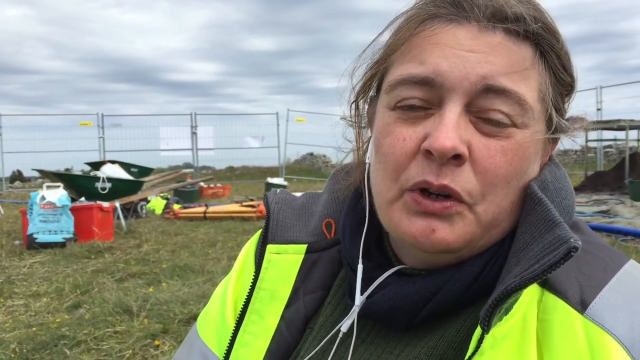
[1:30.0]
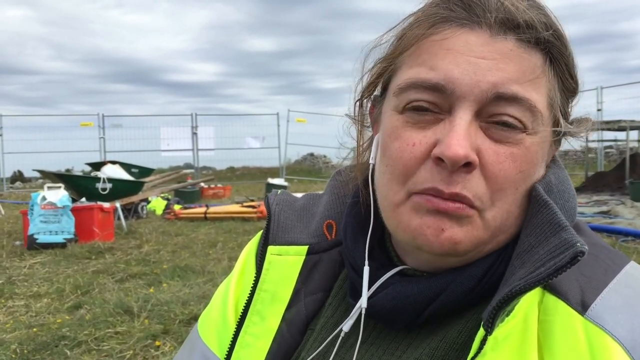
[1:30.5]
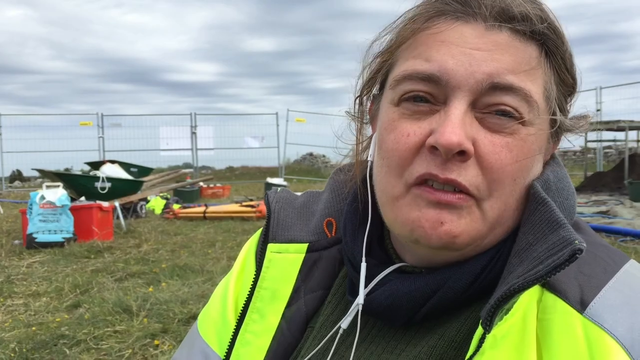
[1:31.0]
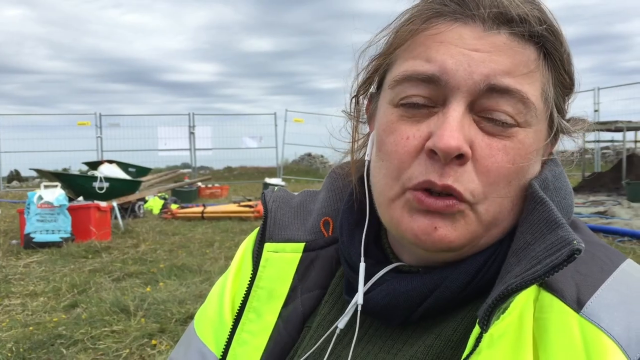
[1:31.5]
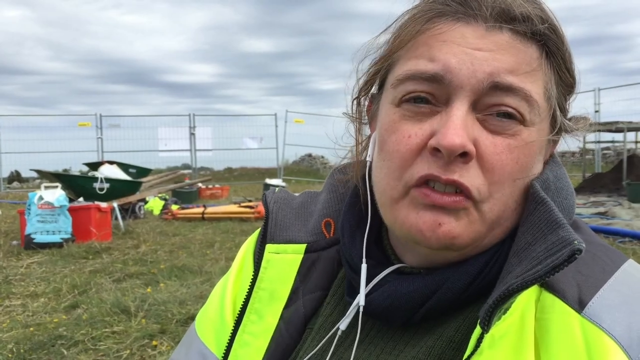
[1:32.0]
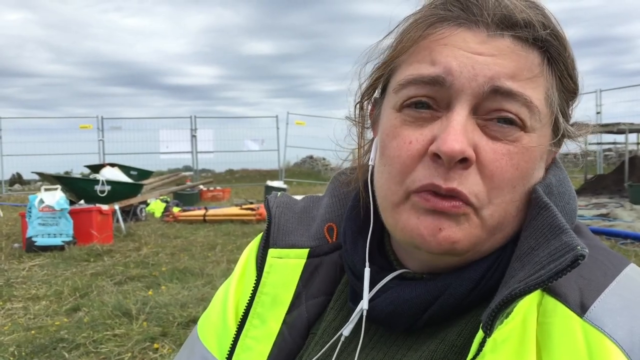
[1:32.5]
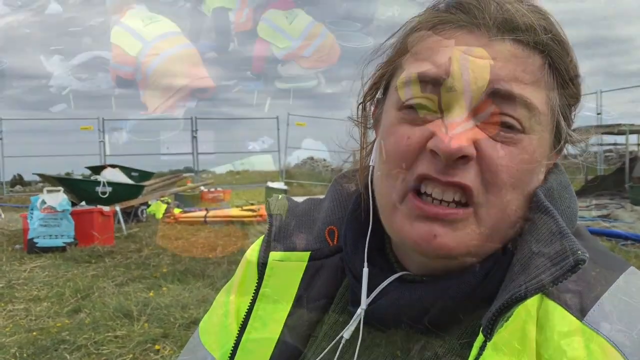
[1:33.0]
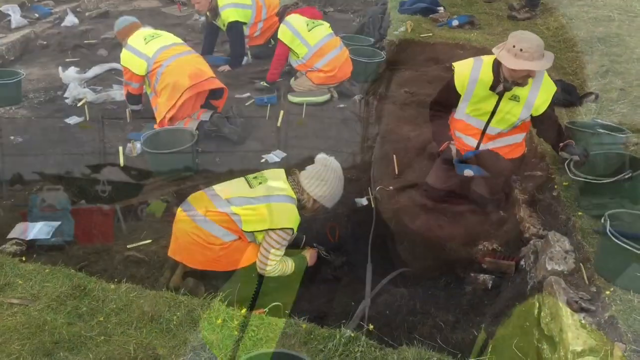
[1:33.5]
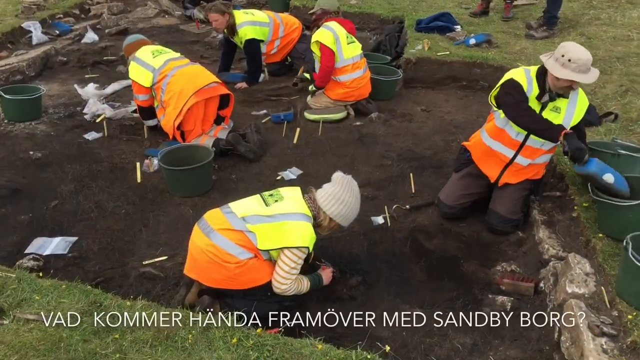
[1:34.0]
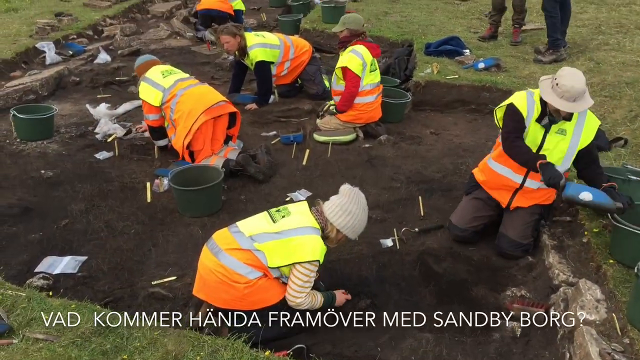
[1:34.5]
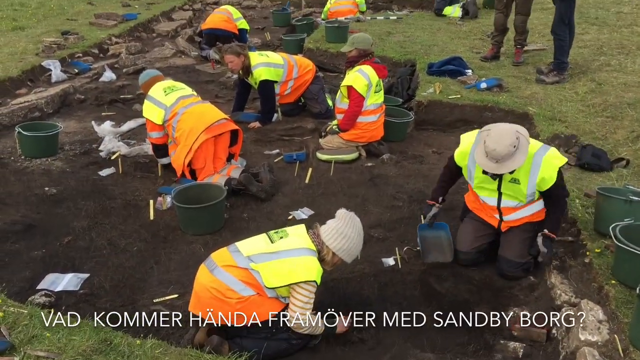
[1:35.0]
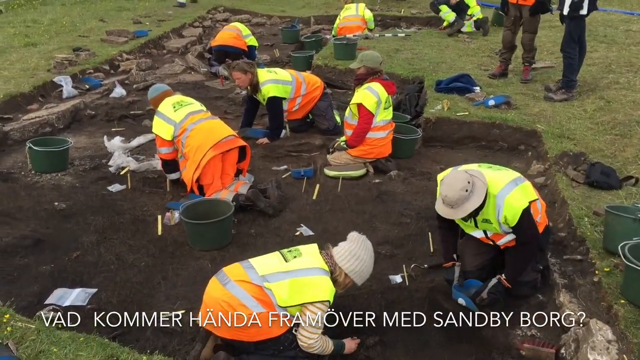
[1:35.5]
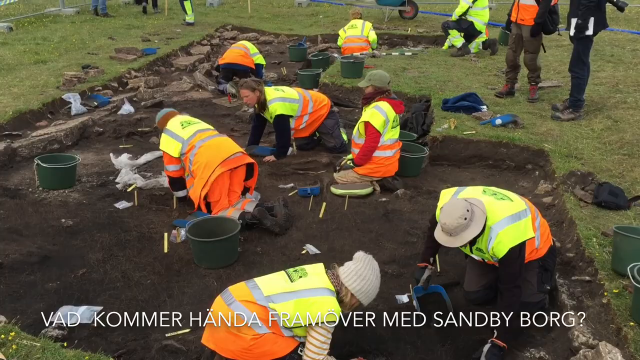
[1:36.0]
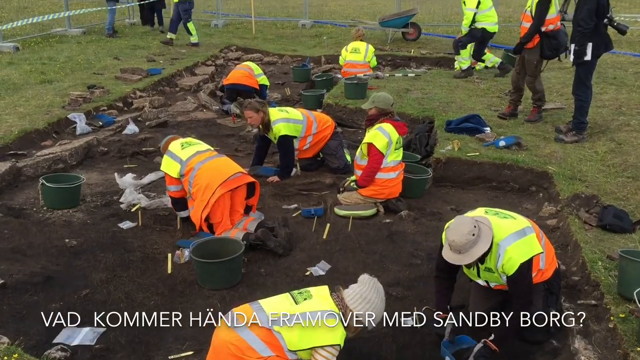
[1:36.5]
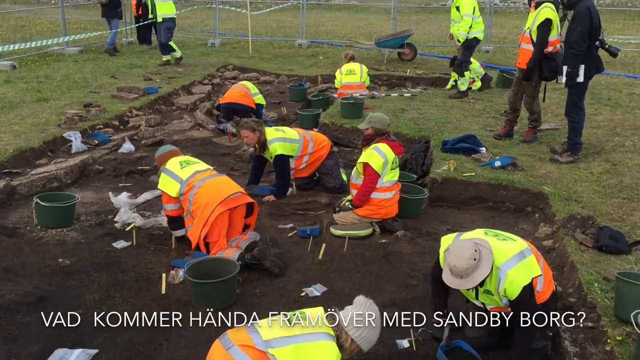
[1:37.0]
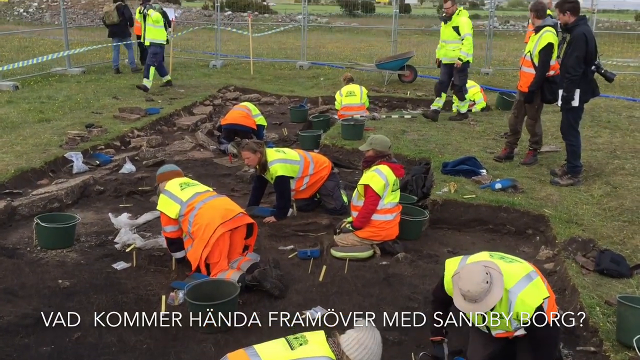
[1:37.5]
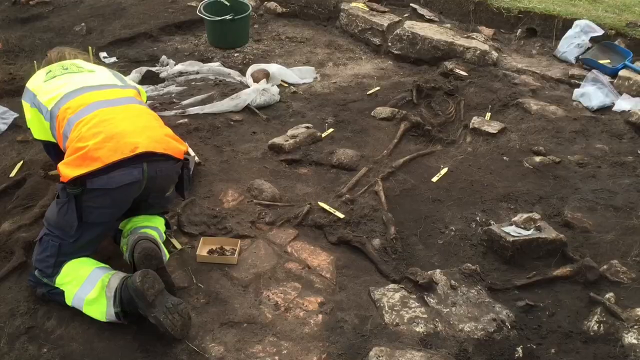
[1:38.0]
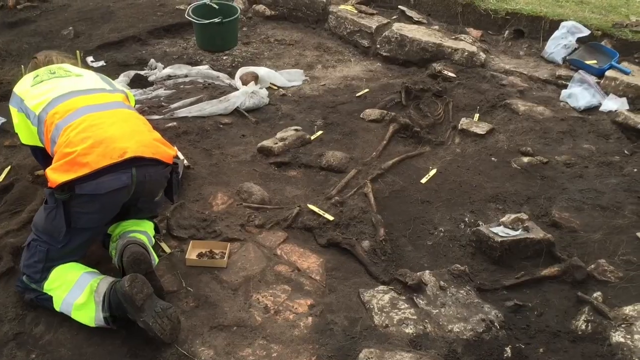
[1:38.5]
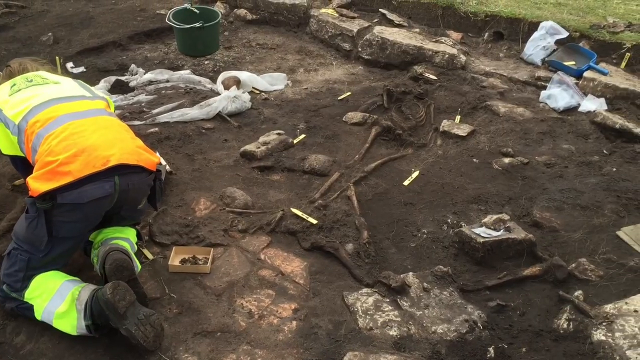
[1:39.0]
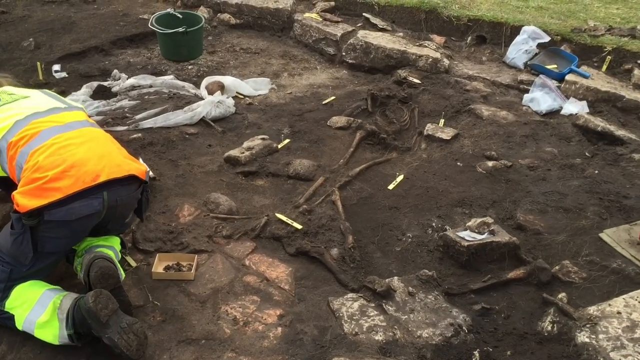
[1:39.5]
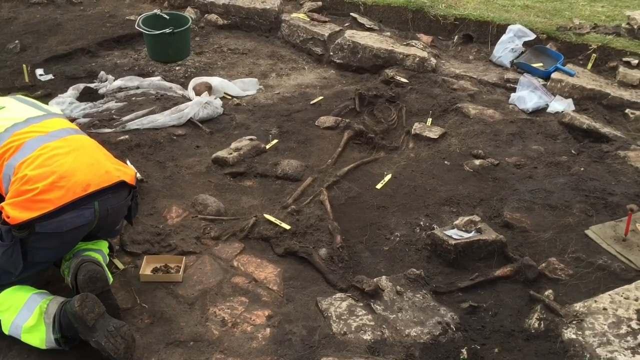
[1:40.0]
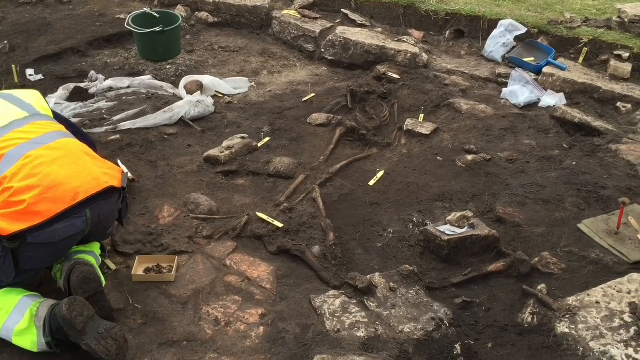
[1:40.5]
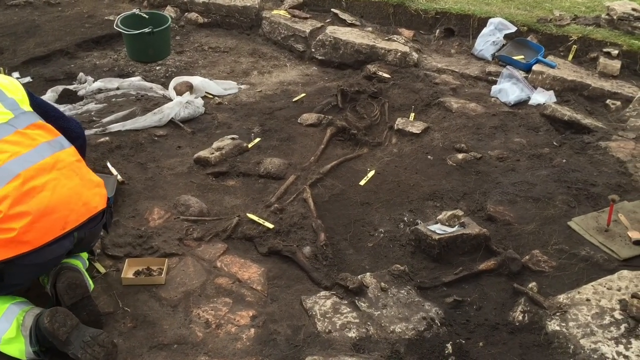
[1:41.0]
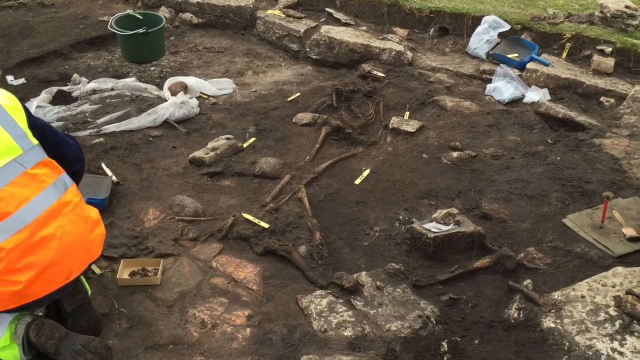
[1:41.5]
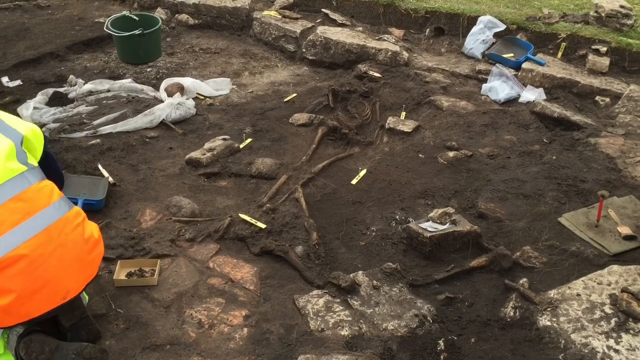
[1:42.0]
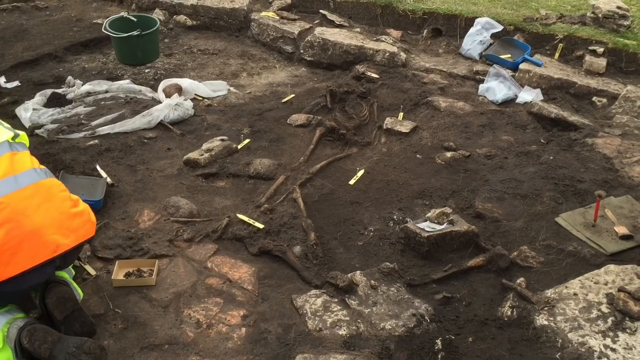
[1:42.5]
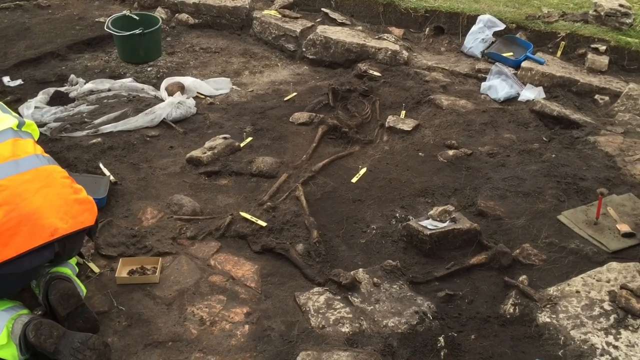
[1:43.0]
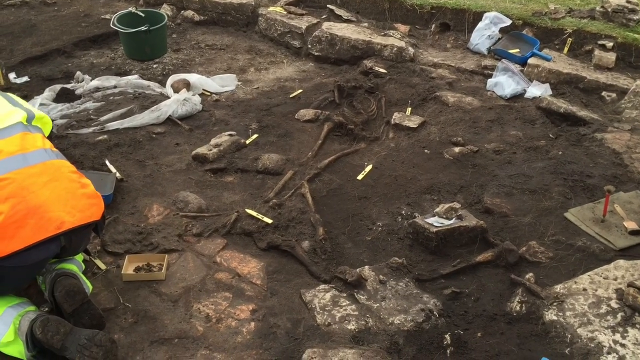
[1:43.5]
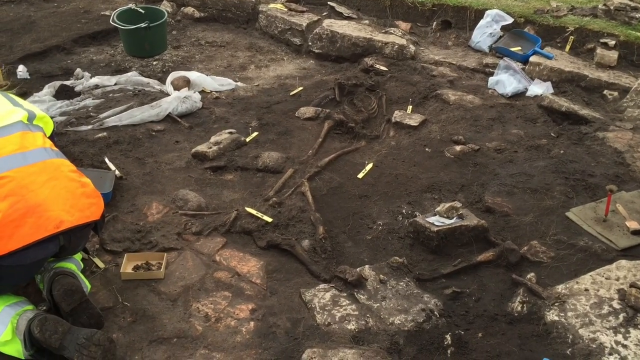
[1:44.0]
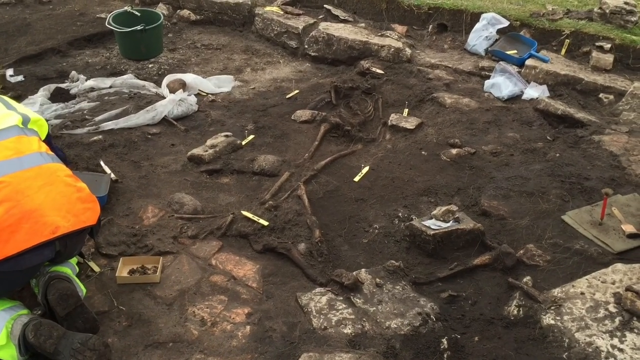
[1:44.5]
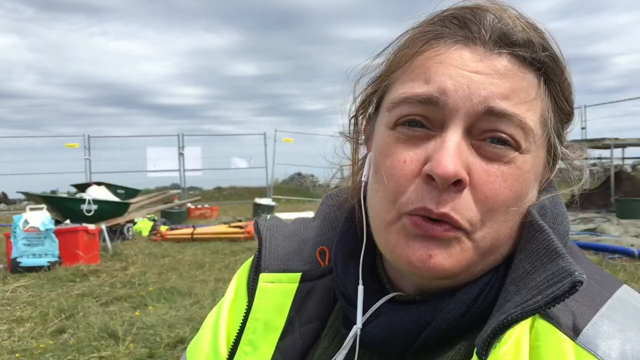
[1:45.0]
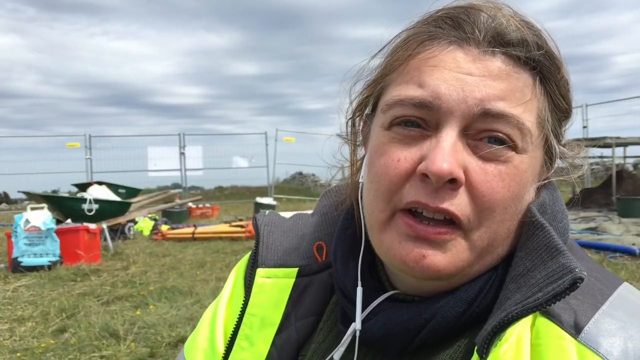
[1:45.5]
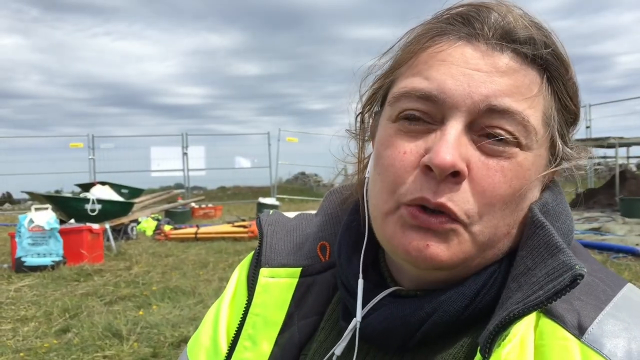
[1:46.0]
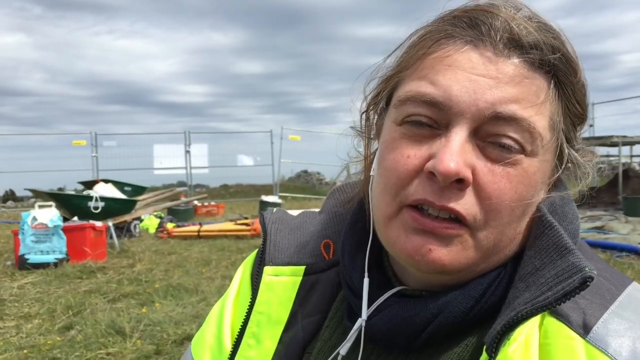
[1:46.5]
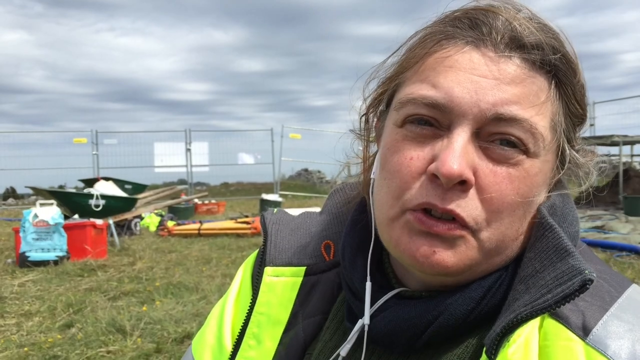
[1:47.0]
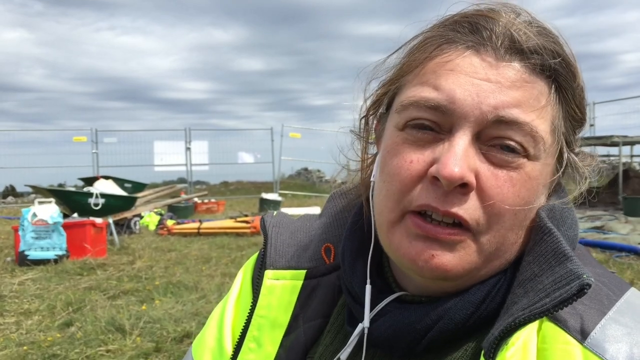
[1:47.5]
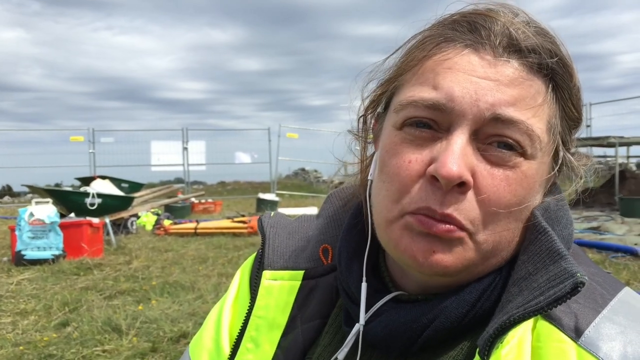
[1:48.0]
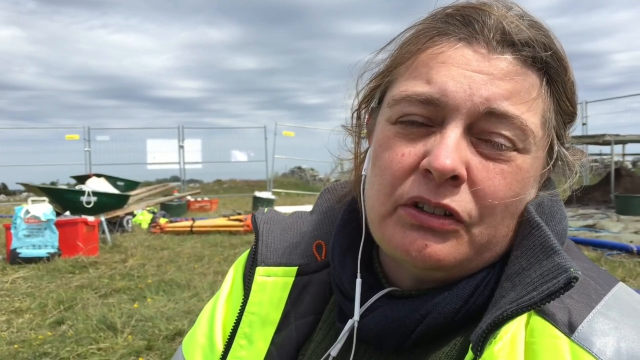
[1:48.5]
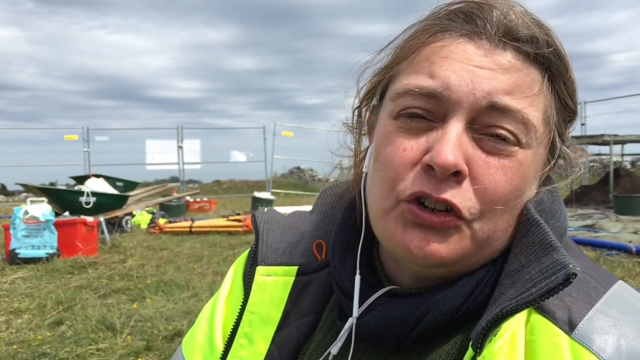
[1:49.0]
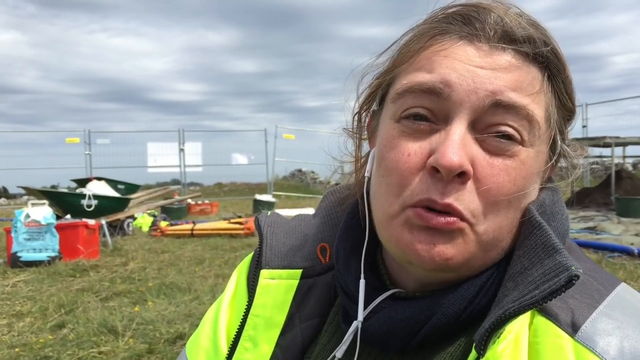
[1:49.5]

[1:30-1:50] The woman continues talking directly to the camera with her headphones in, with the wheelbarrow and the bucket behind her, along with the fences, trees and a cloudy, overcast sky. It is still windy, as her hair moves in the wind. Next, people dig in the ground: around six people, all sitting in the ground, trying to get the dirt. Various buckets and sticks are being used, and there are carrier bags. Around five people stand around the site observing. The skeleton buried in the ground is then shown, surrounded by some of the tools. One person wears a high-vis jacket and high-vis pants, and a blue shovel is used to remove dirt from the area. The video then moves back to the woman talking directly to the camera with her headphones in. It is windy, with some items blown around.